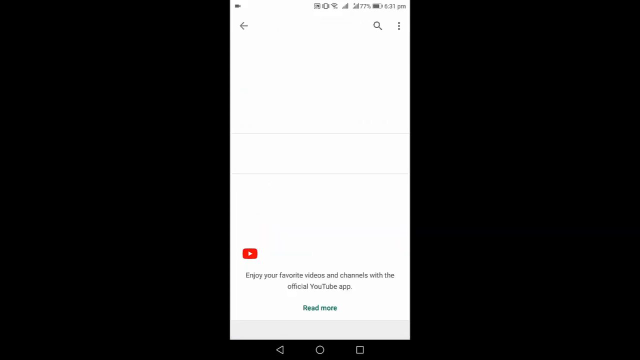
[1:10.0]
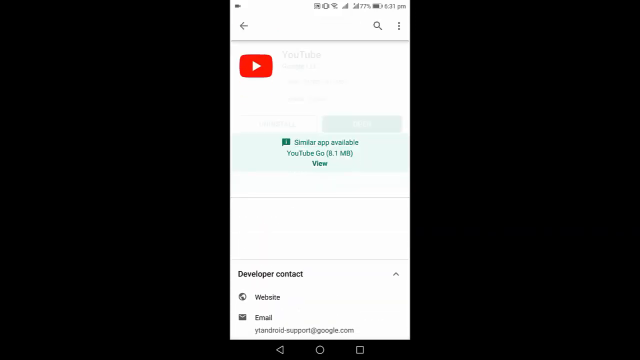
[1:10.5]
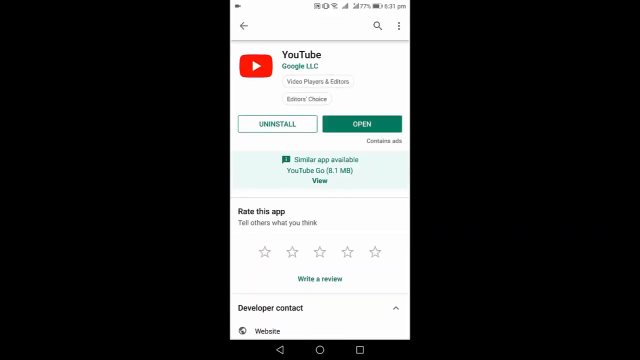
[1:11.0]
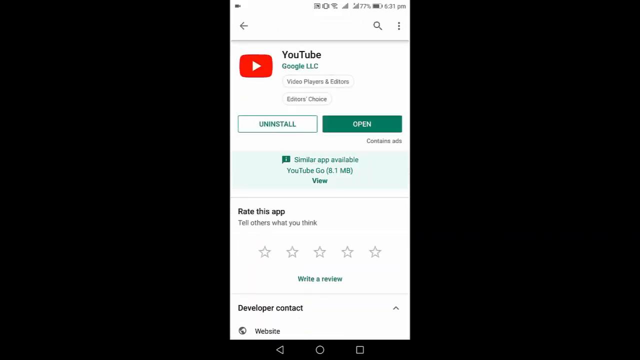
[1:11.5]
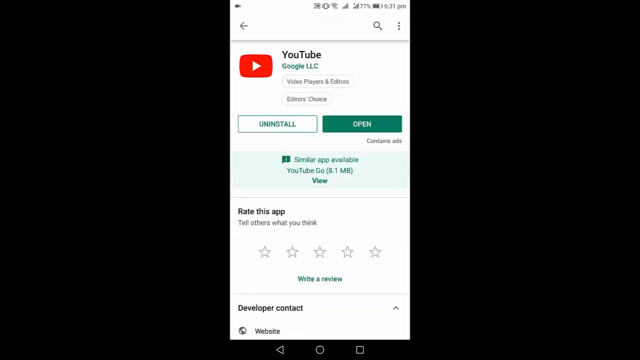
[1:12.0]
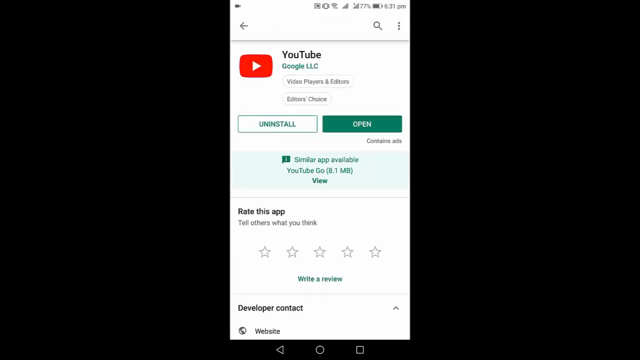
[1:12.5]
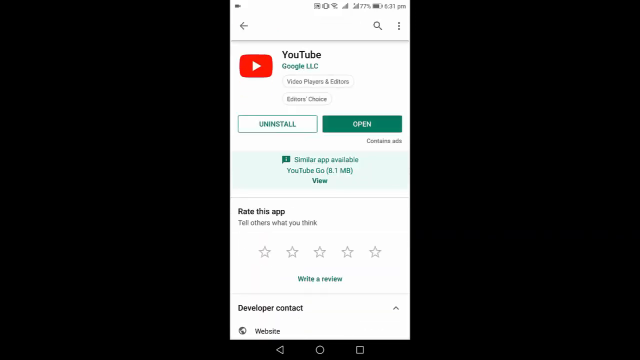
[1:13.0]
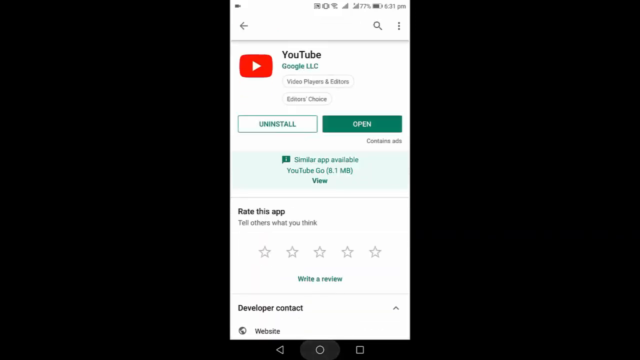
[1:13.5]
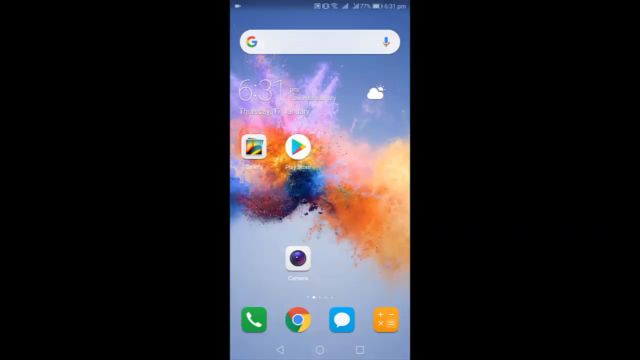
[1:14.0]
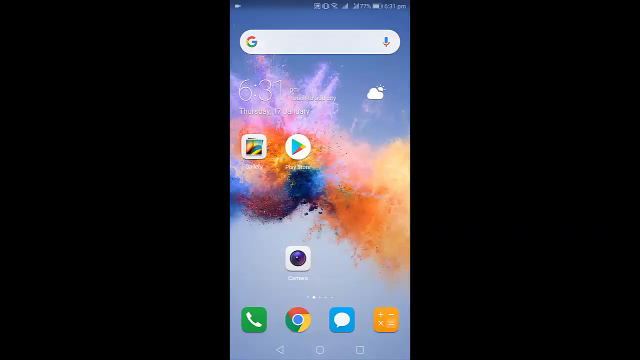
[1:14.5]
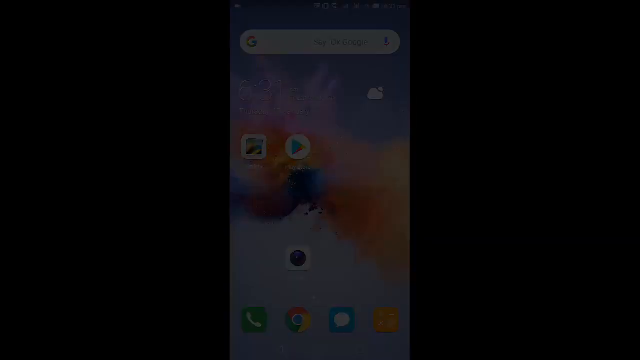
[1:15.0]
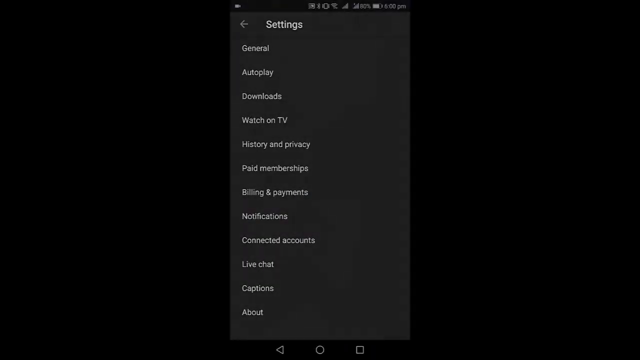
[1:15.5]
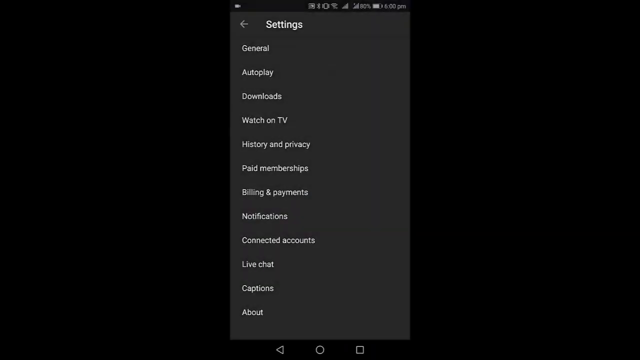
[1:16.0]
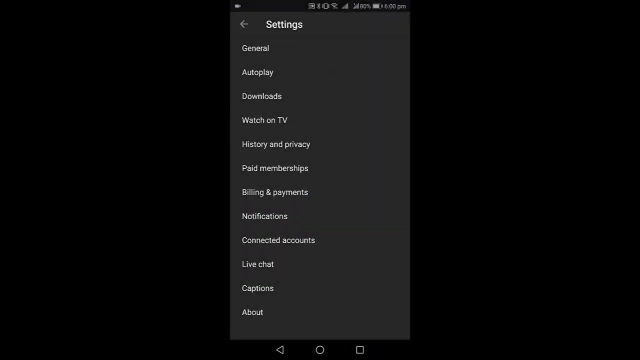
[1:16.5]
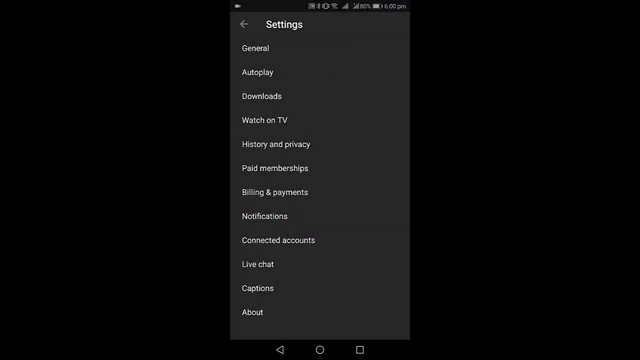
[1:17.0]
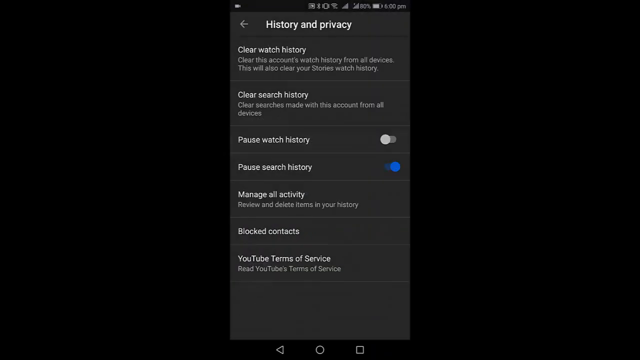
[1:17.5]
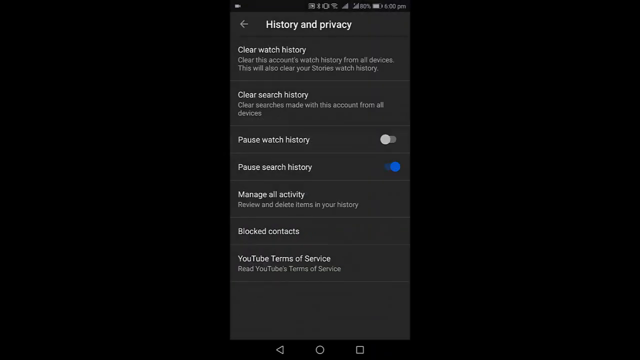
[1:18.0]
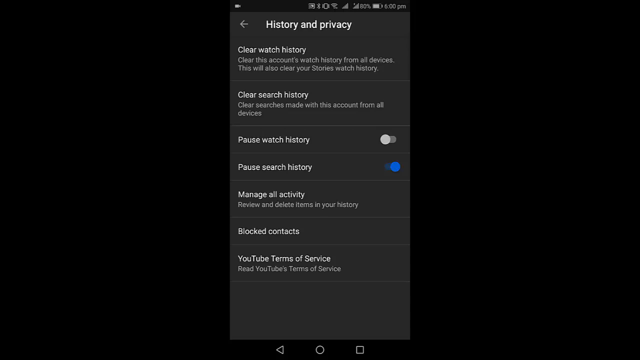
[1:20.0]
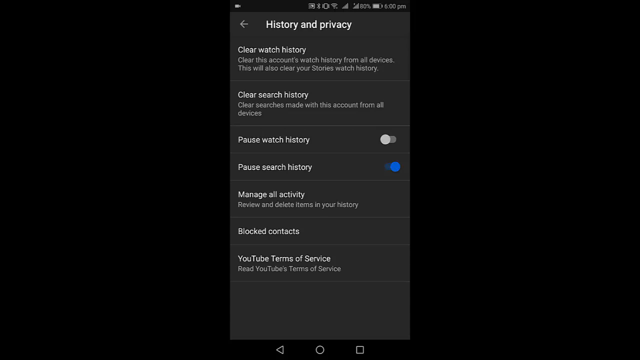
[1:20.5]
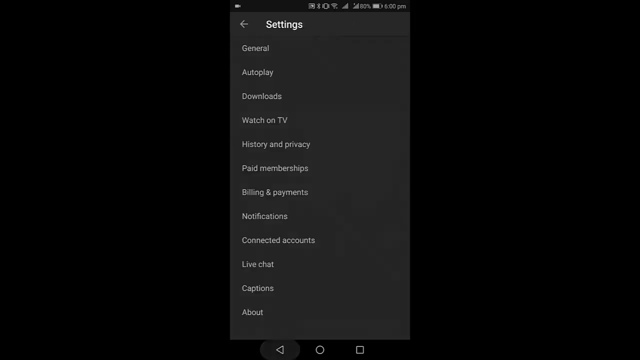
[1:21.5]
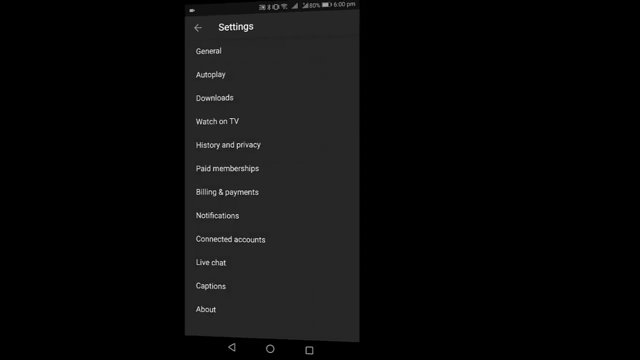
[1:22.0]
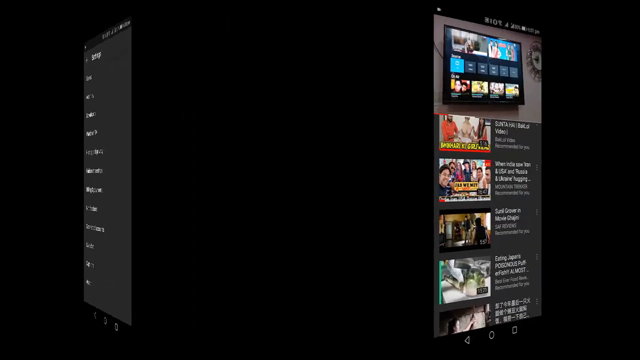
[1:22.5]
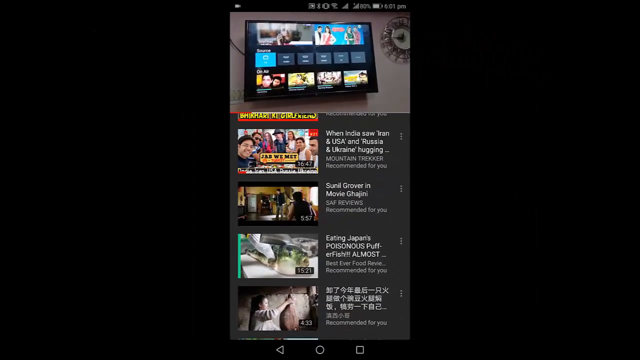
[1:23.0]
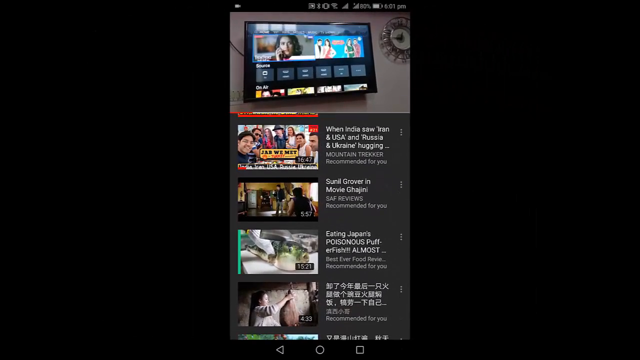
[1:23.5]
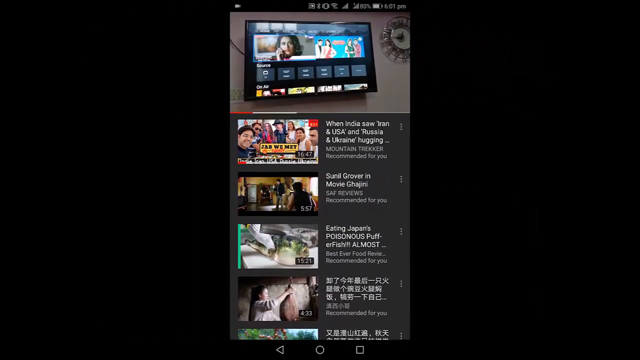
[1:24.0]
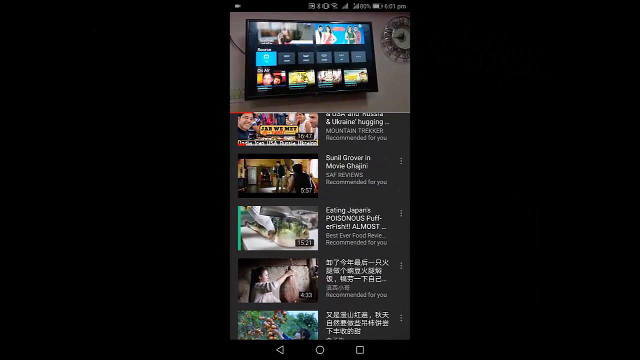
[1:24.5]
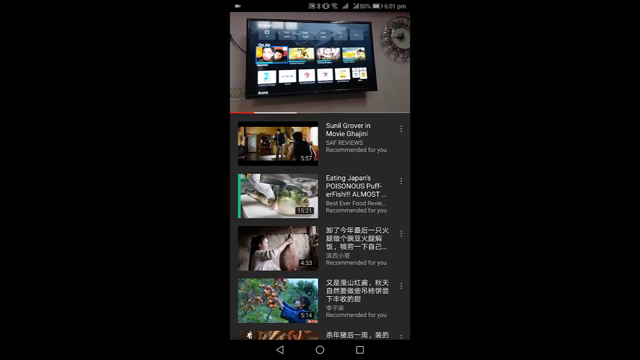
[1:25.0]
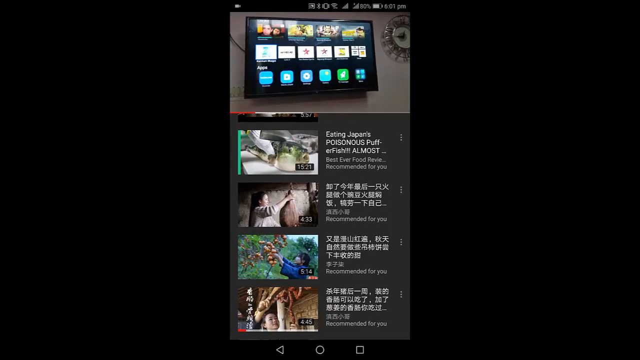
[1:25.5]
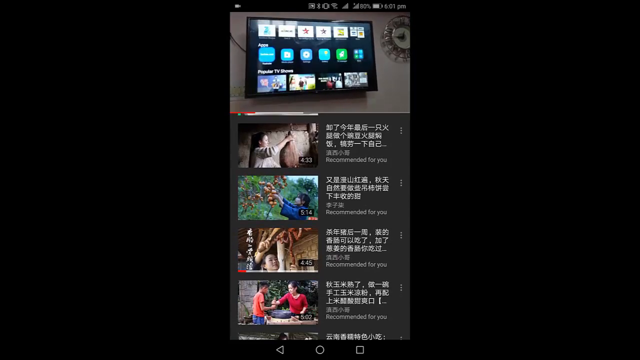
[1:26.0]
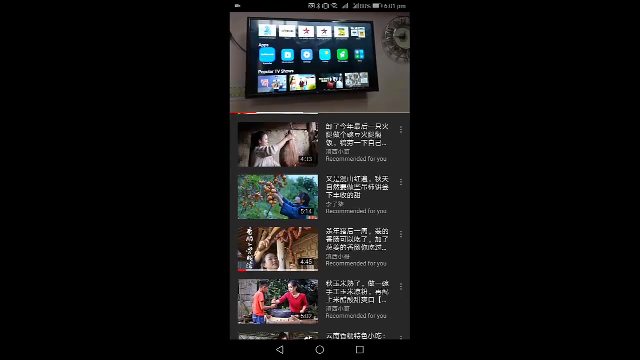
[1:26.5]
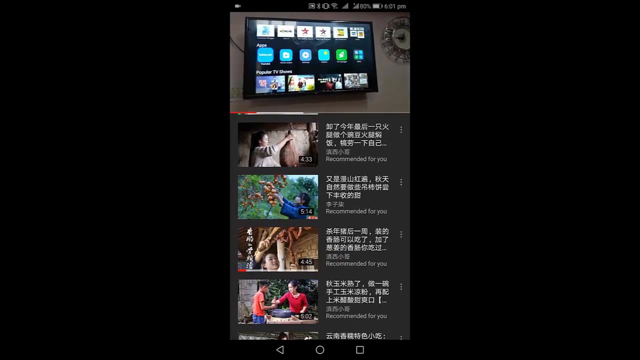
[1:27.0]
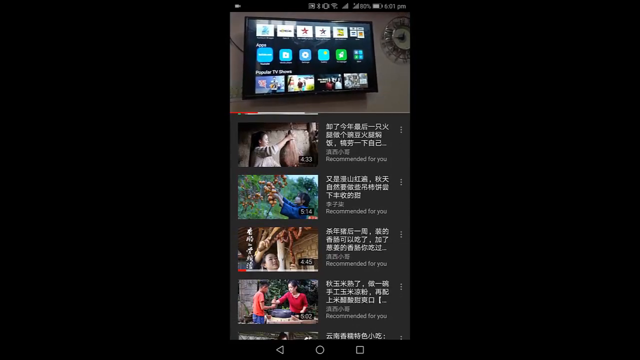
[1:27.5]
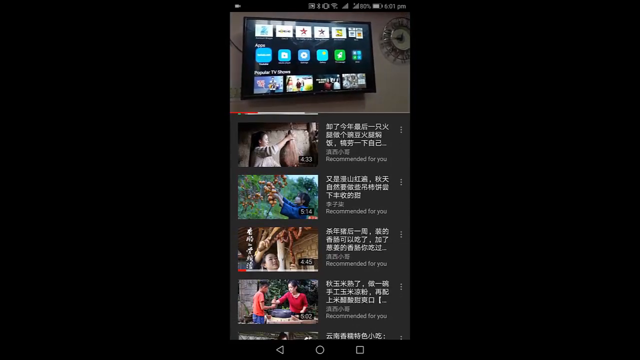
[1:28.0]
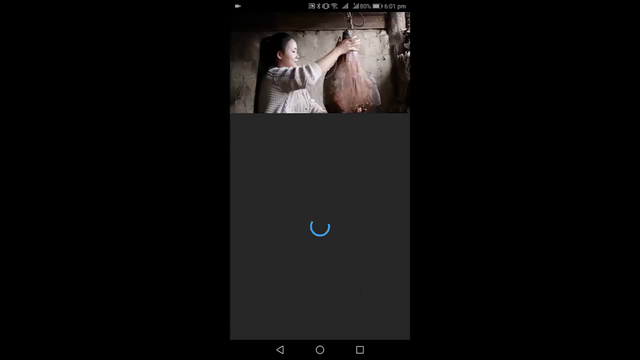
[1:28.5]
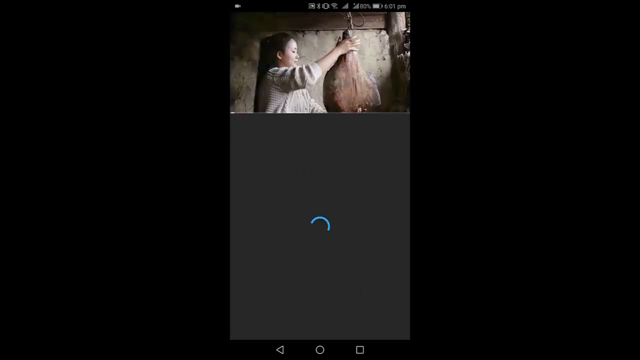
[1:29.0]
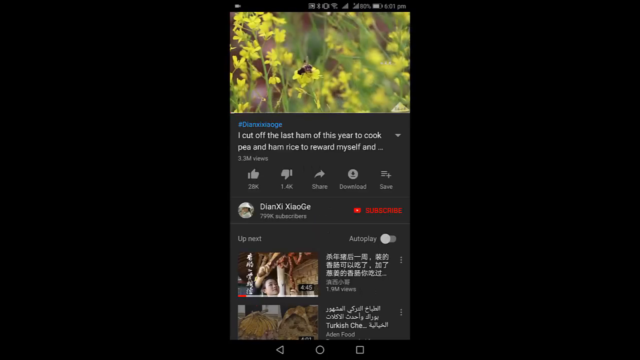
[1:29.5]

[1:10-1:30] In the Play Store's list of apps, he clicks on YouTube, and the YouTube information screen opens, showing "YouTube", "Google LLC" and the options uninstall or open. YouTube appears to be already updated. Below is the option to rate the app, which has not been rated yet. The view switches back to the phone's home screen and goes to settings, probably YouTube's settings, though how this screen is reached is unclear. The settings include general, autoplay, download, watch on TV, history and privacy, paid memberships, billings and payments, notifications, connect accounts and live chat. It looks like history and privacy is selected, showing "clear watch history" and "Clear this accounts watch history from all devices", apparently with search history options as well, and "YouTube terms of service" at the very bottom. It then switches over to YouTube.